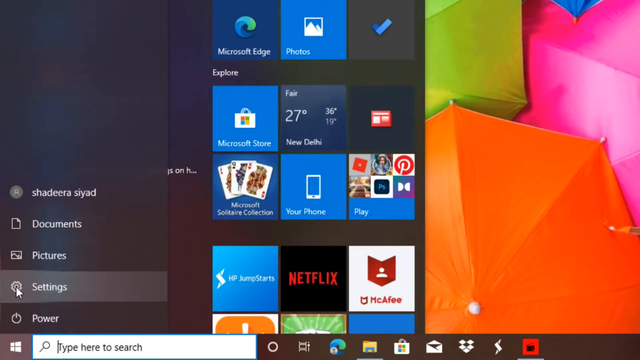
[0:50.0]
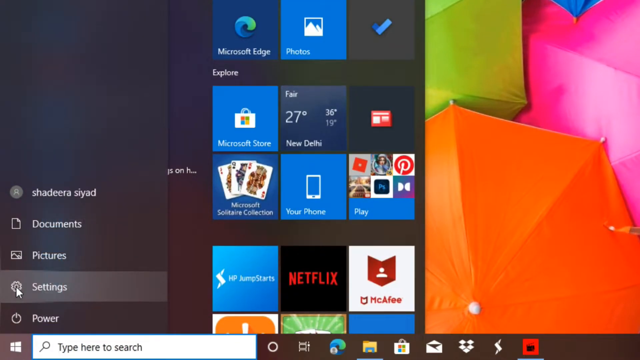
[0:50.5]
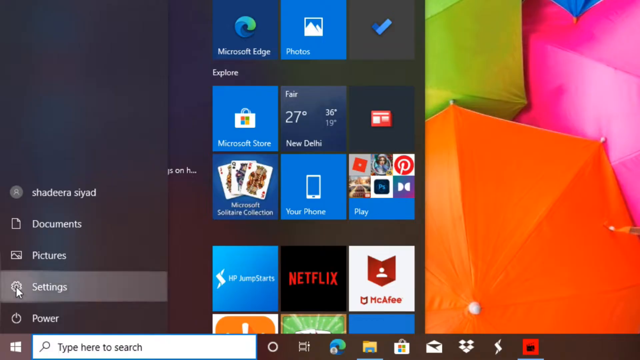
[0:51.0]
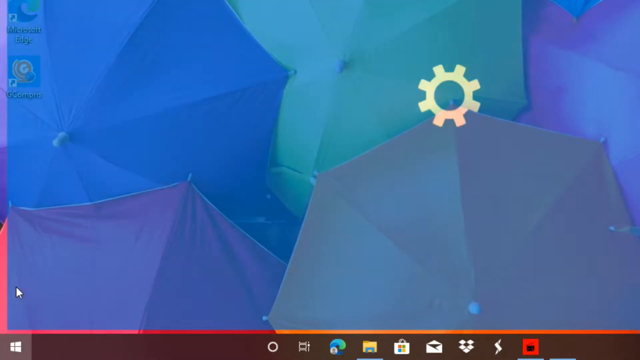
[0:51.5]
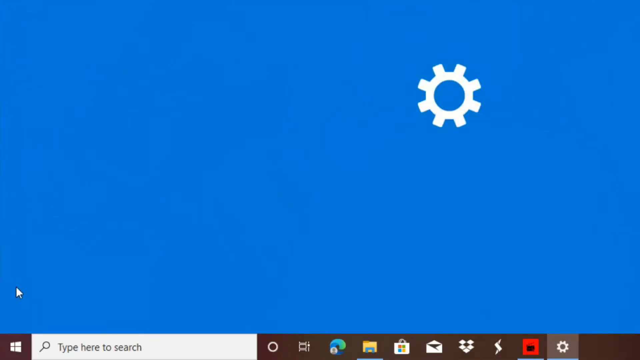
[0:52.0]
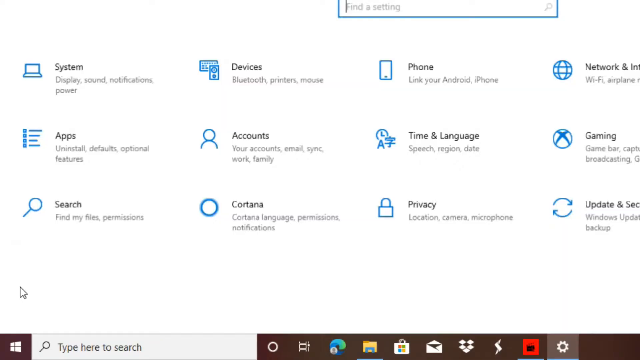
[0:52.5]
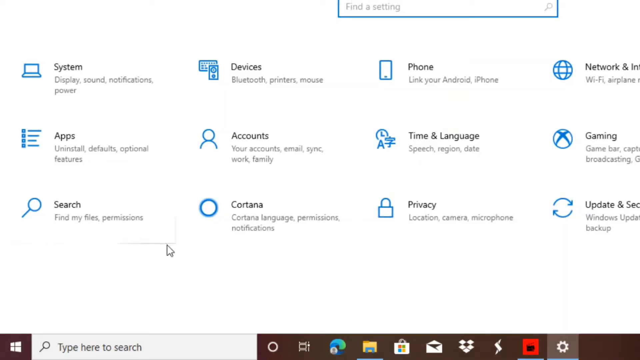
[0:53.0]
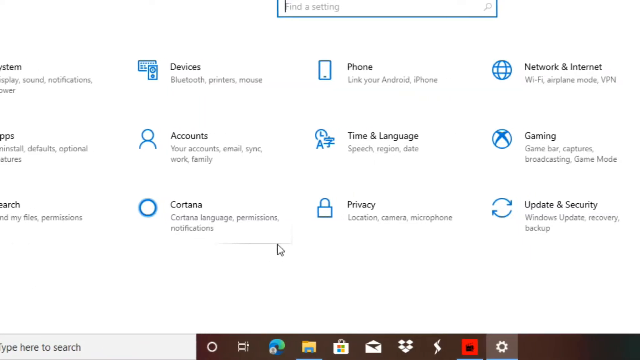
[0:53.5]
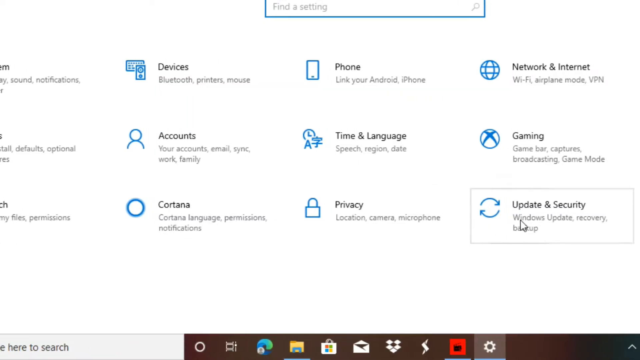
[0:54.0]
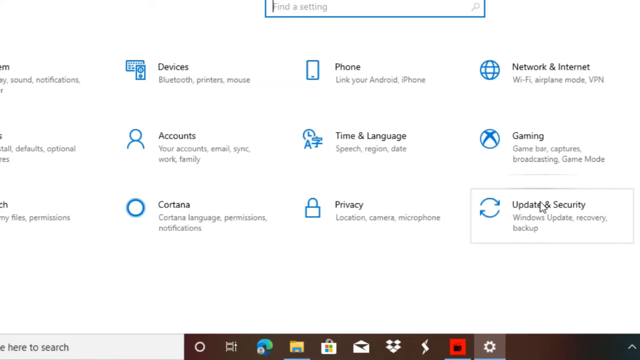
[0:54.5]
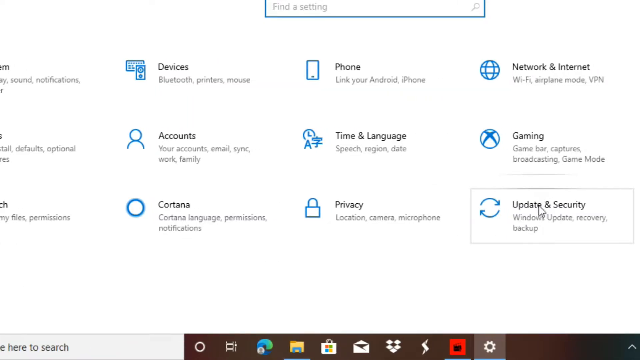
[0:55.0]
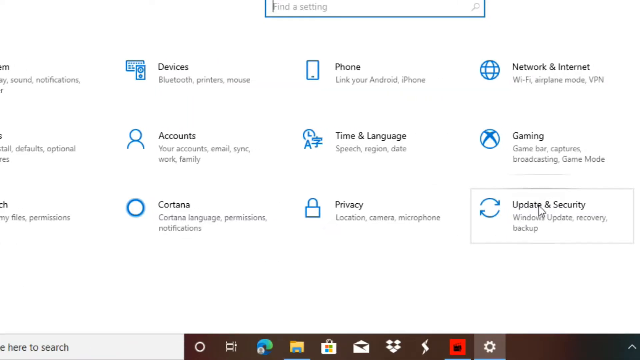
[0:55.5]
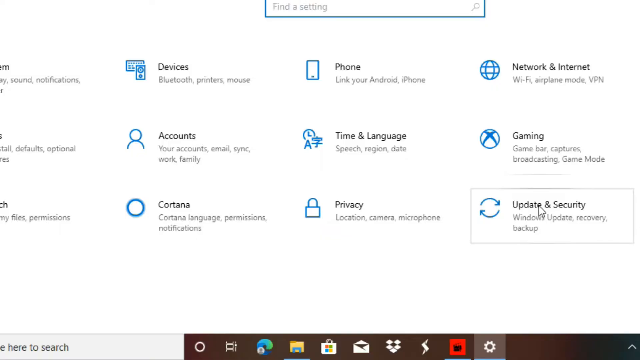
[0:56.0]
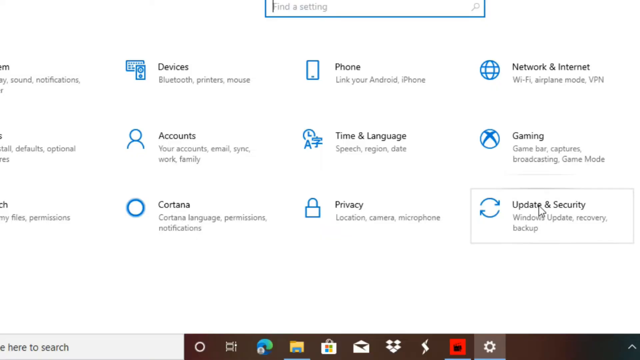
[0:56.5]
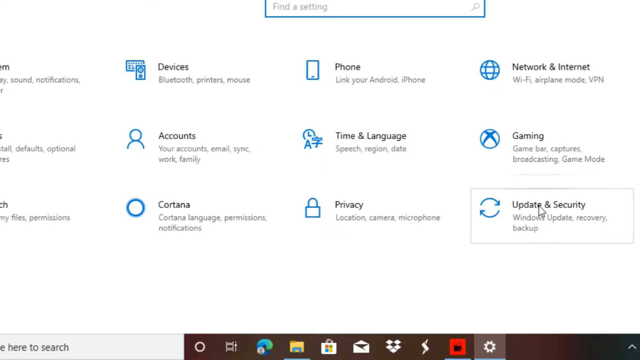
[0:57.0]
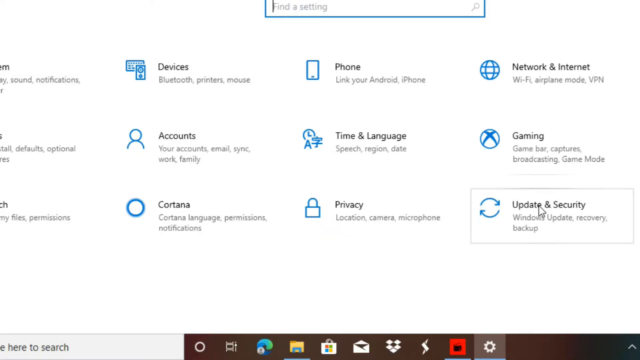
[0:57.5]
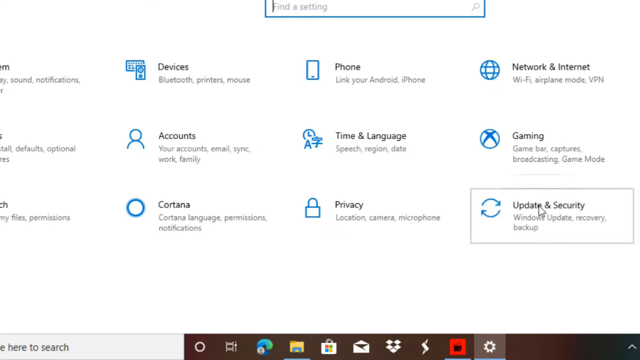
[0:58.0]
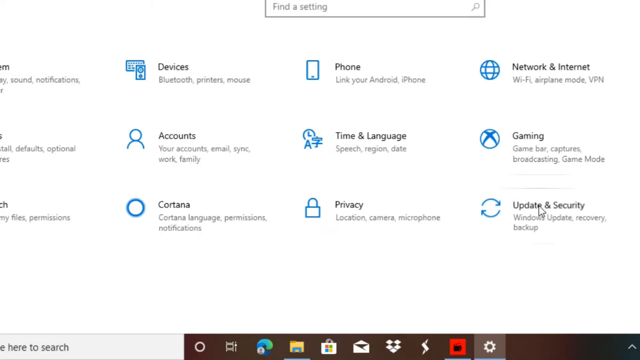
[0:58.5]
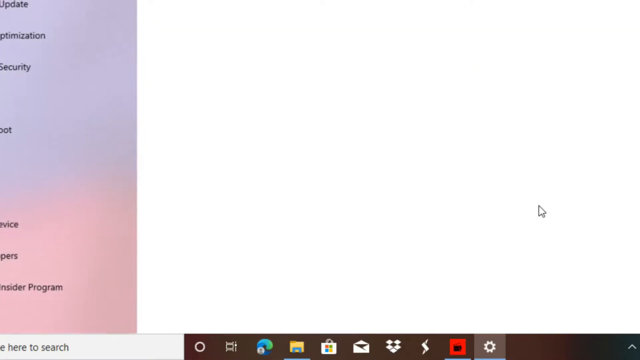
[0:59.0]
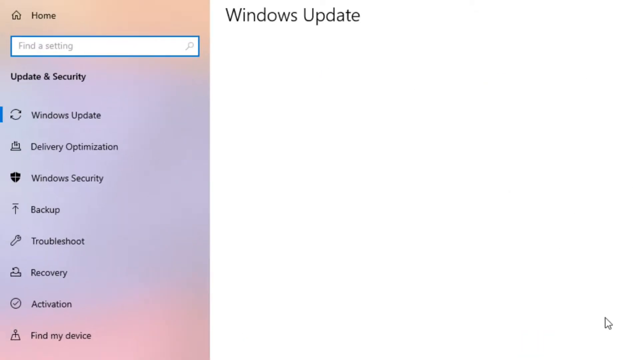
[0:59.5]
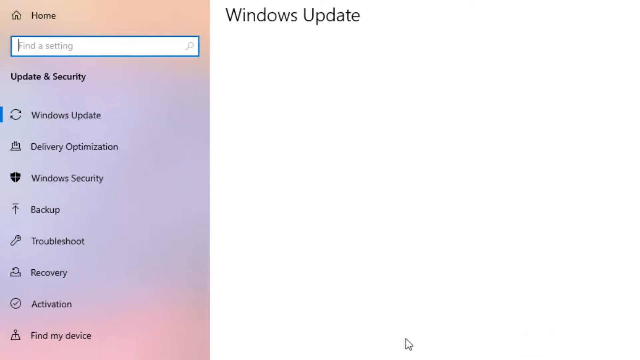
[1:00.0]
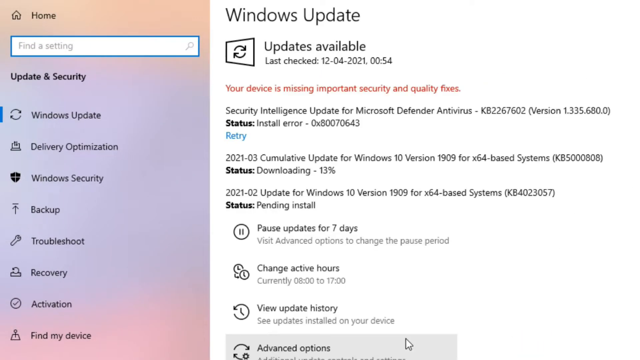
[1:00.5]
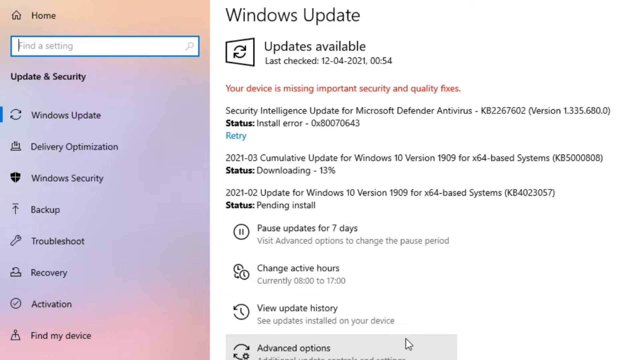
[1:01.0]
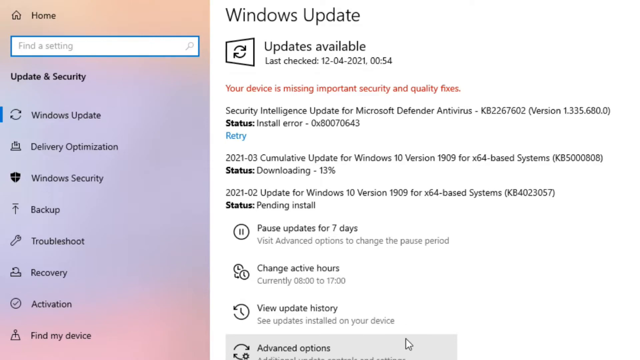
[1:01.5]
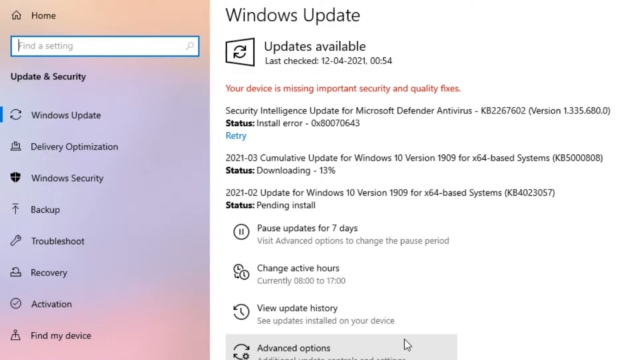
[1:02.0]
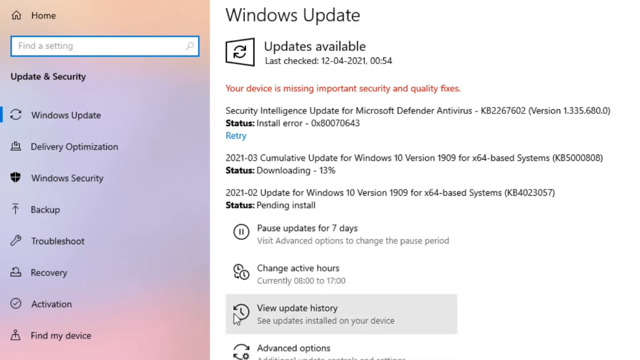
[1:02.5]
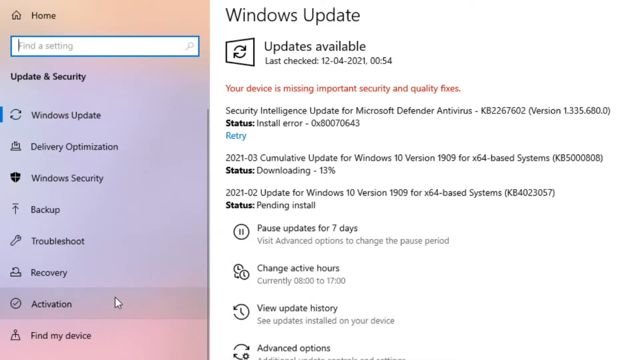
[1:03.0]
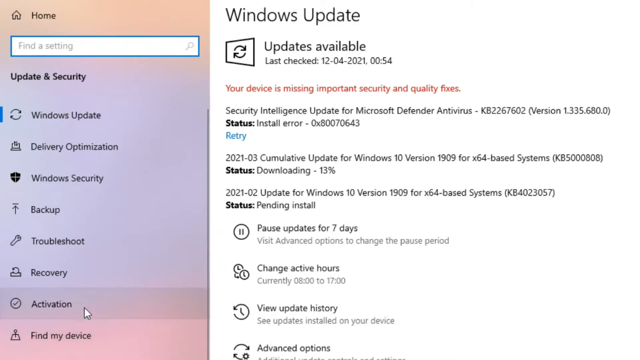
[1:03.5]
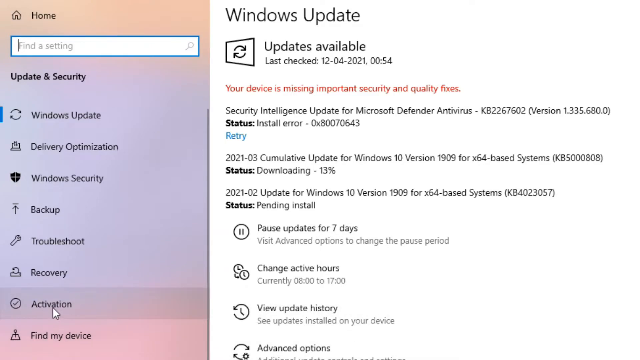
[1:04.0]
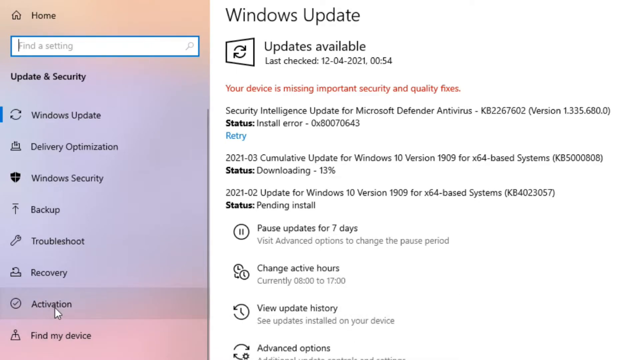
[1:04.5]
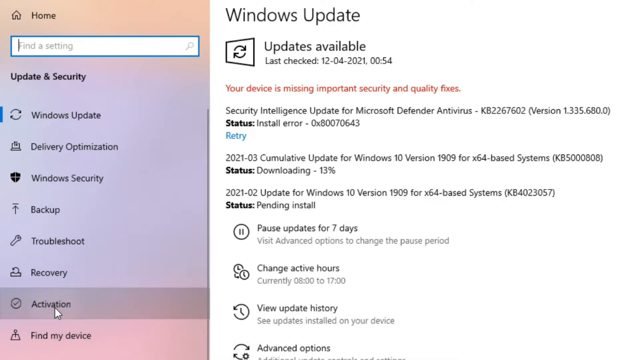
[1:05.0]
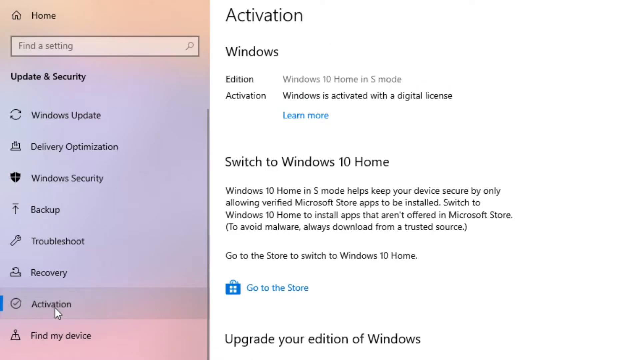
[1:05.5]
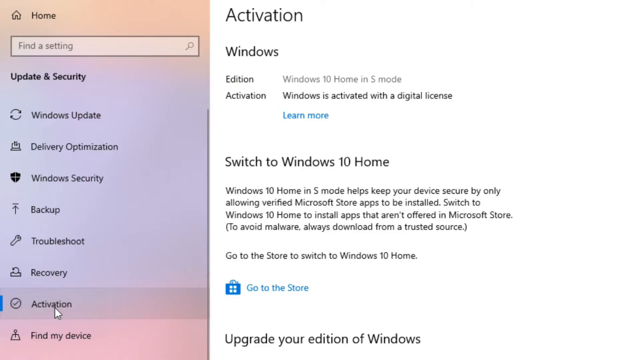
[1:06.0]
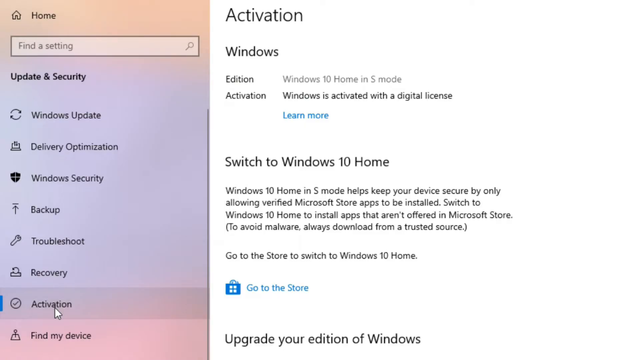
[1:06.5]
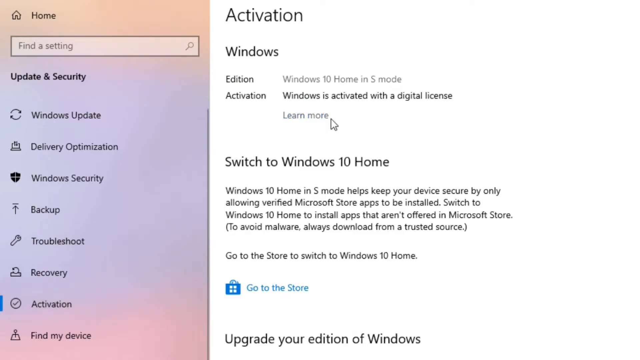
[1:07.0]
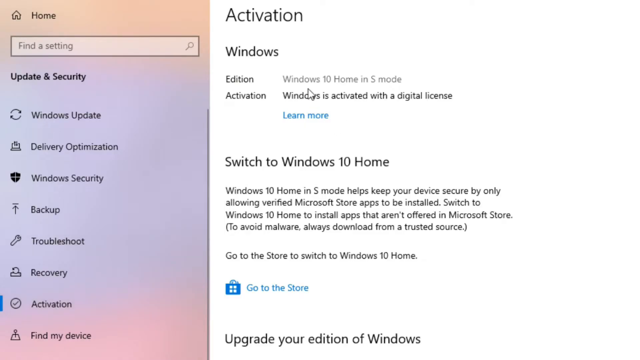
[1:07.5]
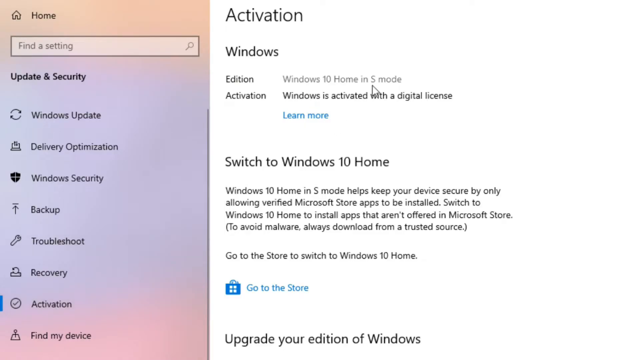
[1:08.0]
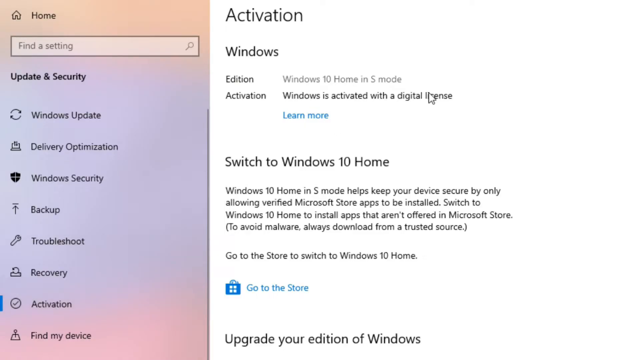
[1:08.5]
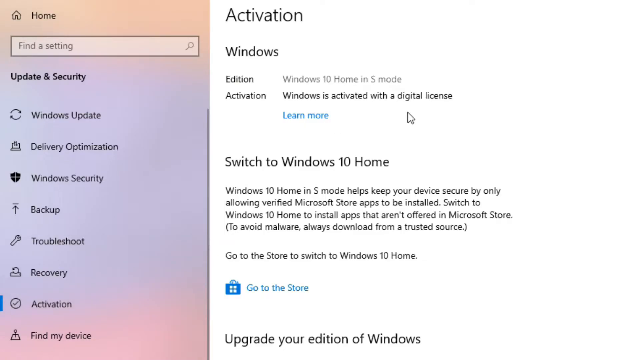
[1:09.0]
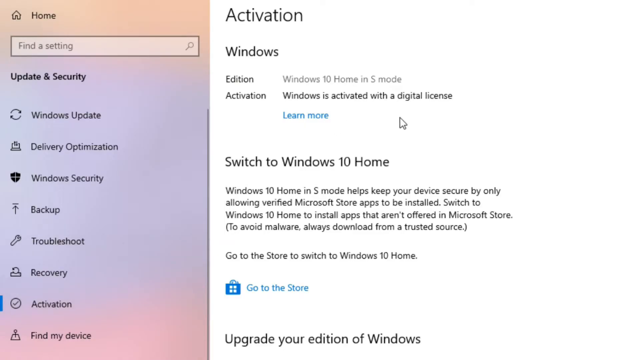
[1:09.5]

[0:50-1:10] Settings opens while the view is still kind of zoomed in. The mouse kind of circles around the Update and Security button, then clicks it, and the view is positioned toward the top of the page, sort of panning to the relevant area. They click Activation on the side, which shows the edition "Windows 10 Home in S mode" and the activation status "Windows is activated with a digital license"; the mouse kind of circles around that status text, right below the edition. The page background is white, while the sidebar is kind of translucent with an orangish purple color, apparently showing the umbrella wallpaper blurred out.